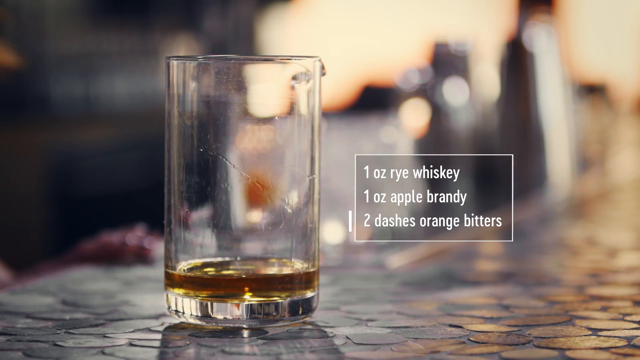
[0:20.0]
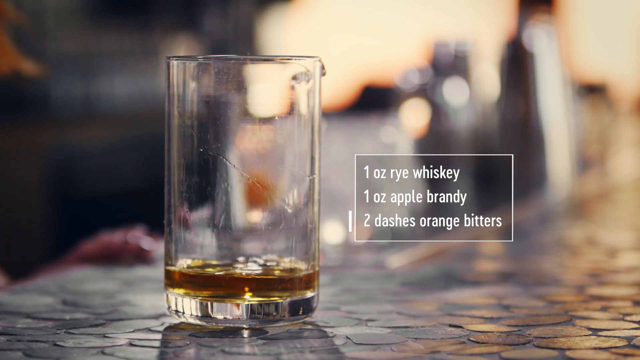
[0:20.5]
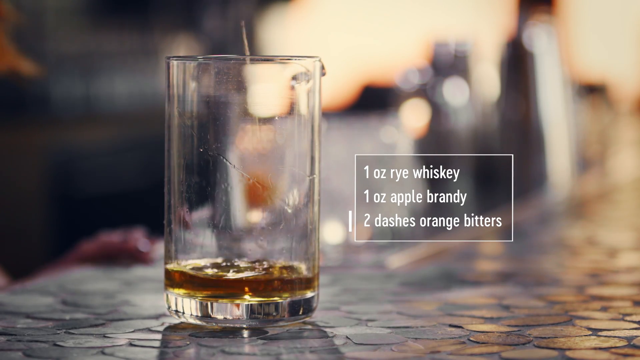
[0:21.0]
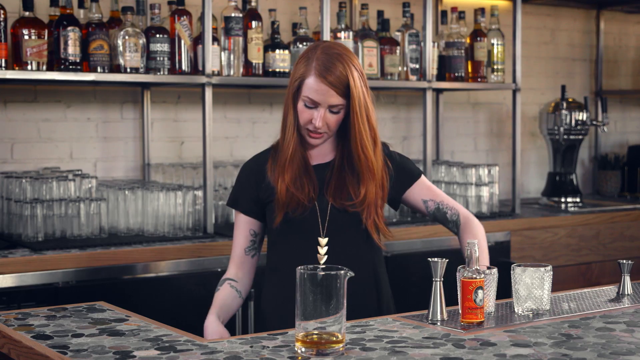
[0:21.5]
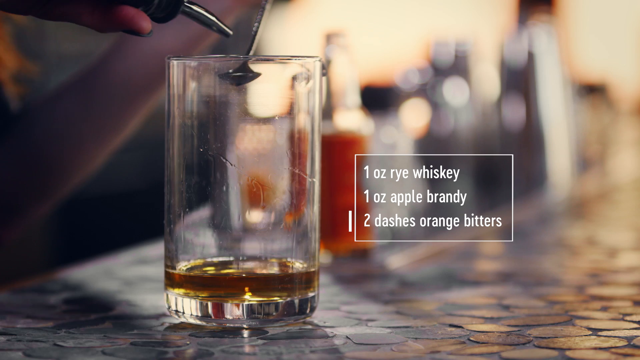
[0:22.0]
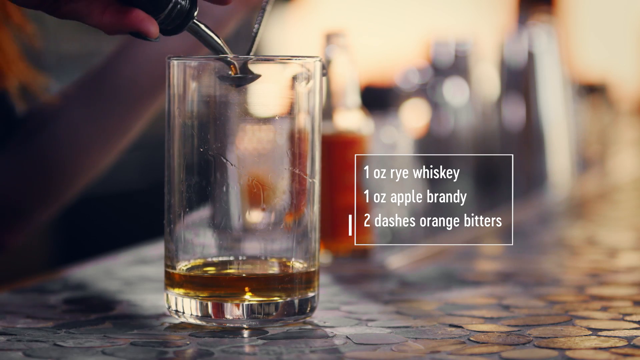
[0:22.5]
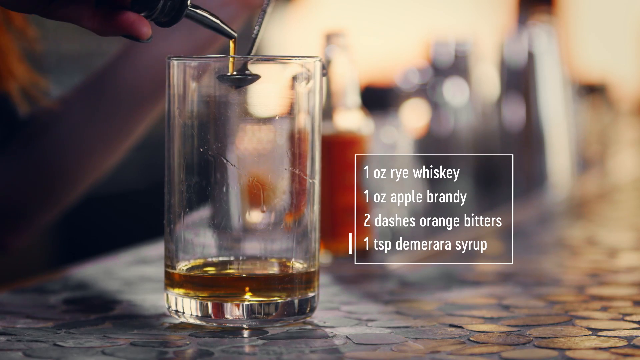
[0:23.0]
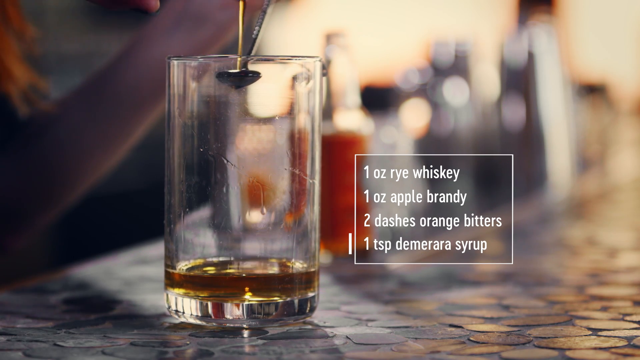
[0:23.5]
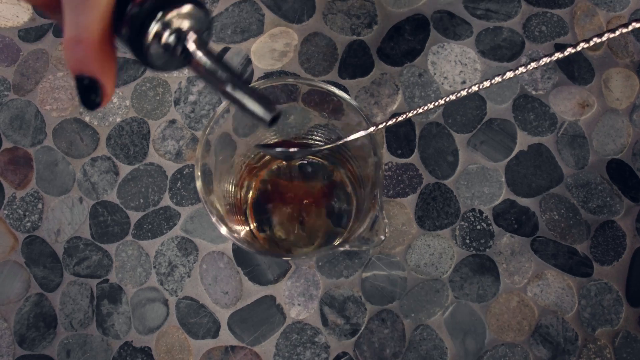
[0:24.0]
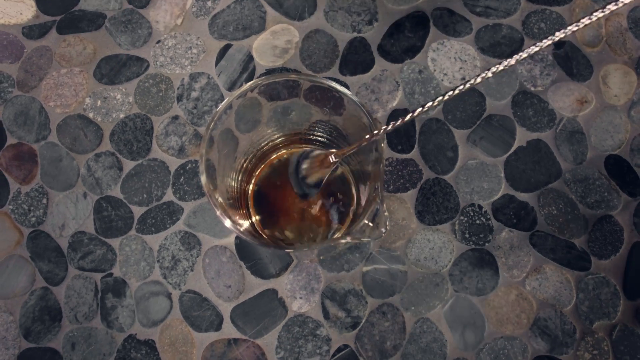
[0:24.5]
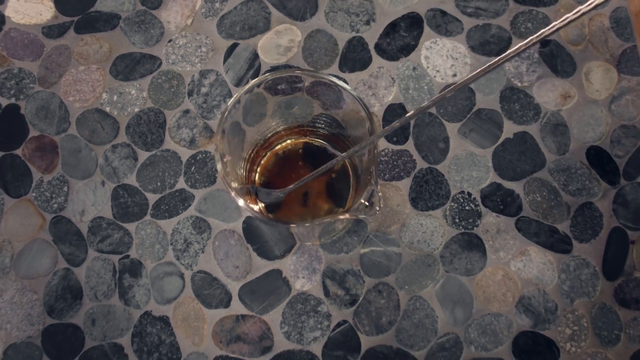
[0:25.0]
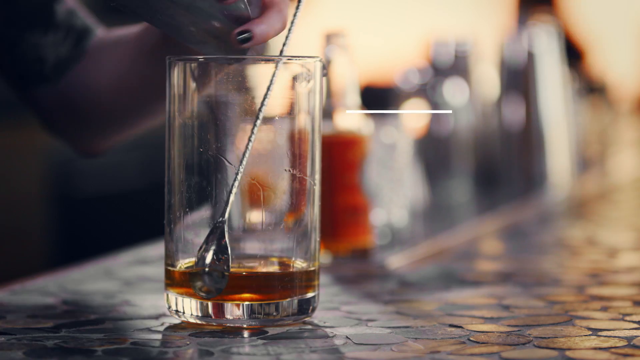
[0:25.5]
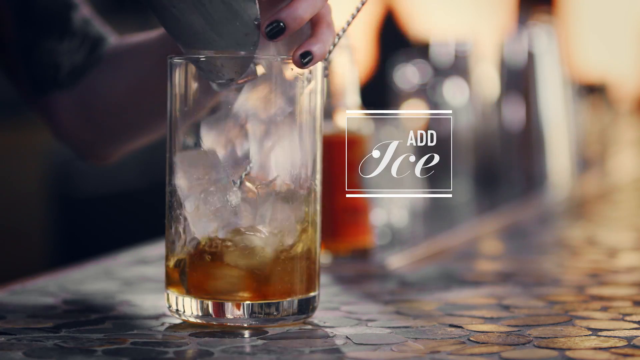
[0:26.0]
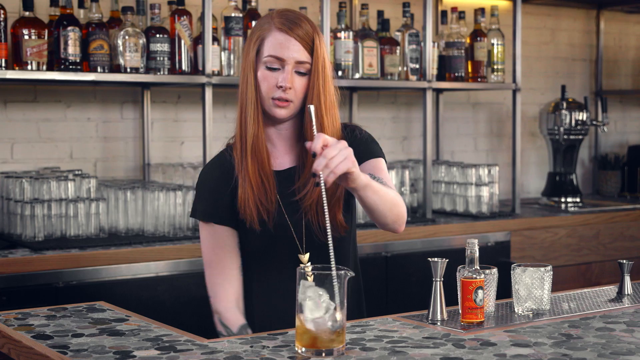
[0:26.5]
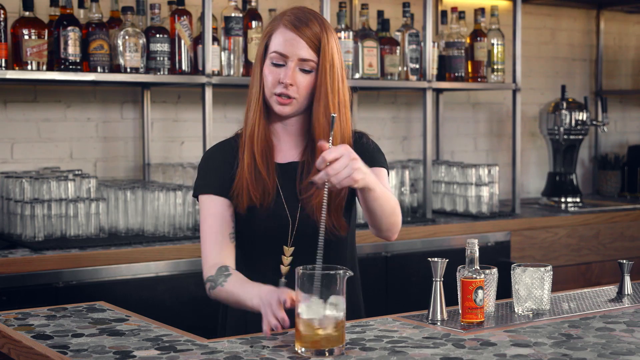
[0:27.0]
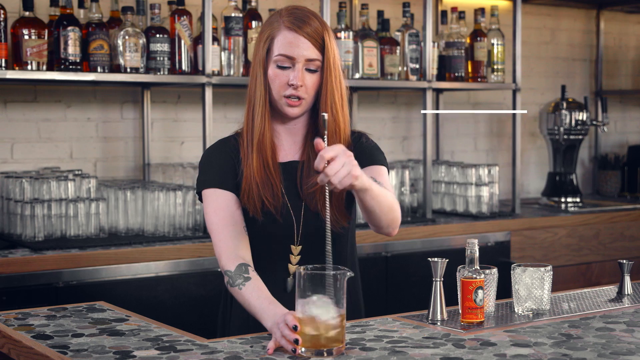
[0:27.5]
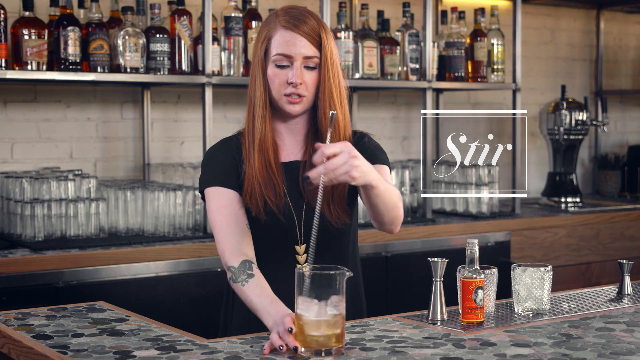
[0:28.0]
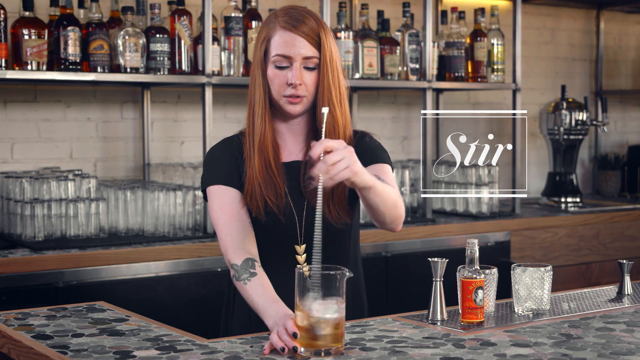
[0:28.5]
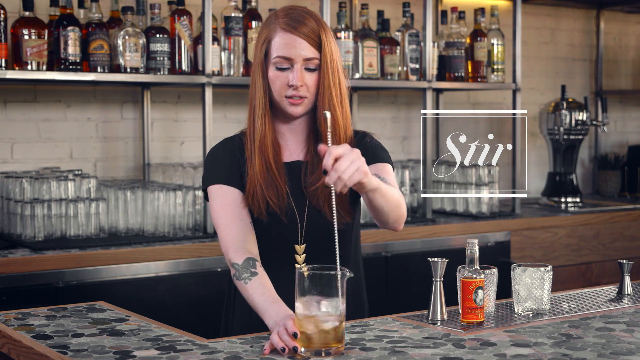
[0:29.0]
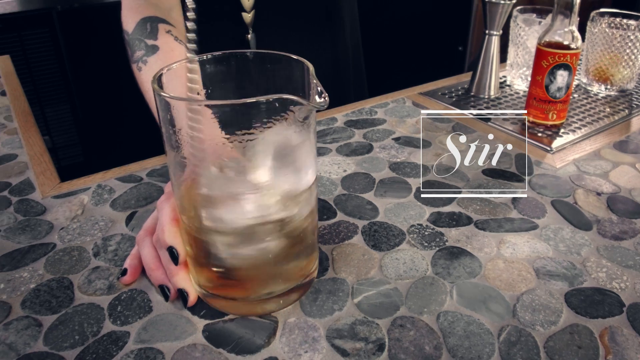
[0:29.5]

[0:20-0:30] The woman pours two dashes of orange bitters and one teaspoon of demerara syrup as she makes the cocktail. The background is so blurry that hardly anything is visible, though a bottle can be made out behind her. The counter looks modern. She appears confident as she works. She uses a long spoon to stir; its head is the size of a teaspoon, but the handle is very long, and she uses it to mix the brandy, whiskey and orange bitters together.